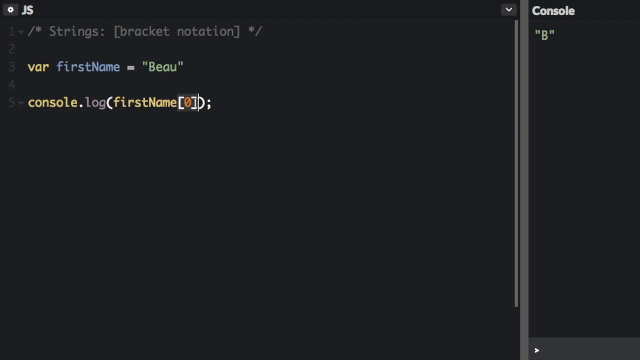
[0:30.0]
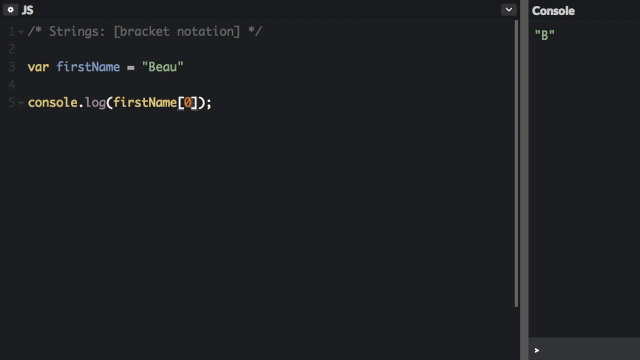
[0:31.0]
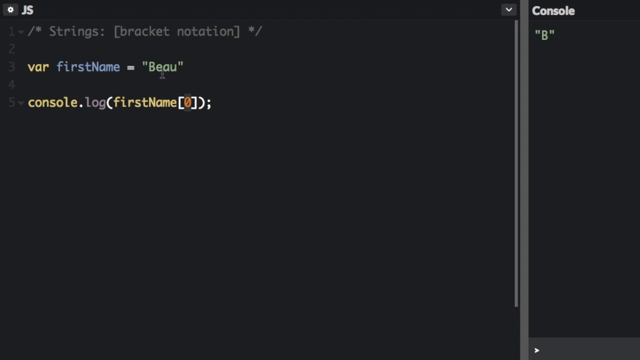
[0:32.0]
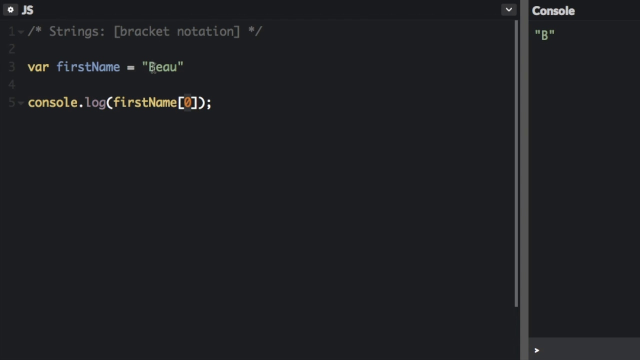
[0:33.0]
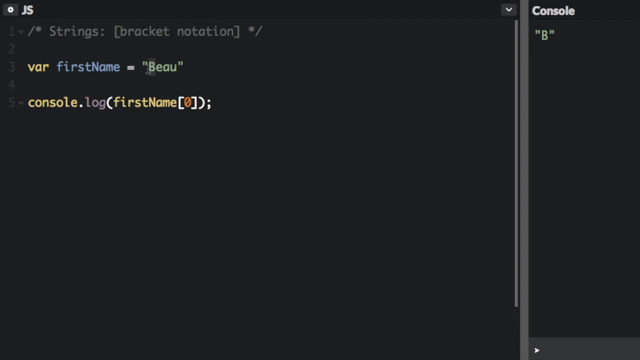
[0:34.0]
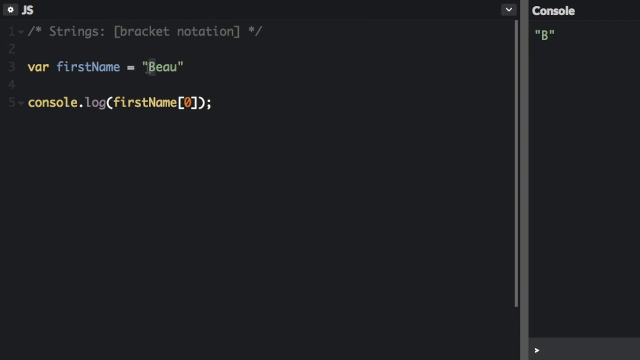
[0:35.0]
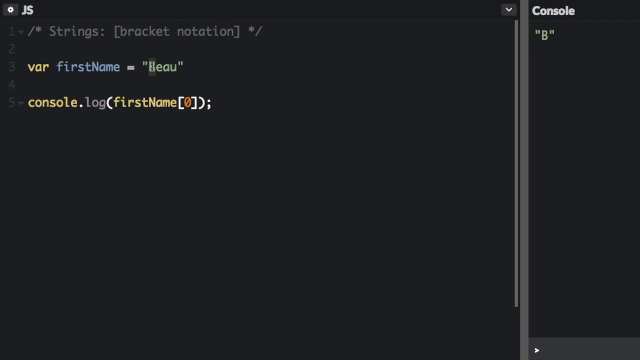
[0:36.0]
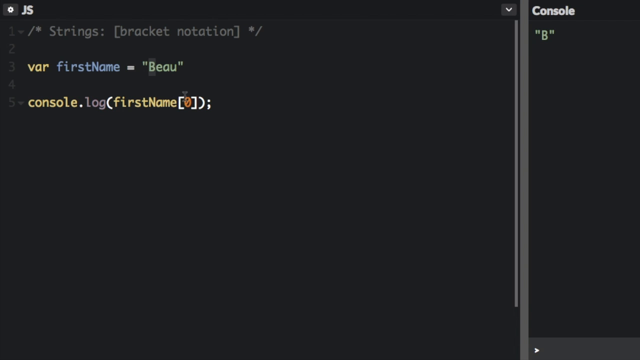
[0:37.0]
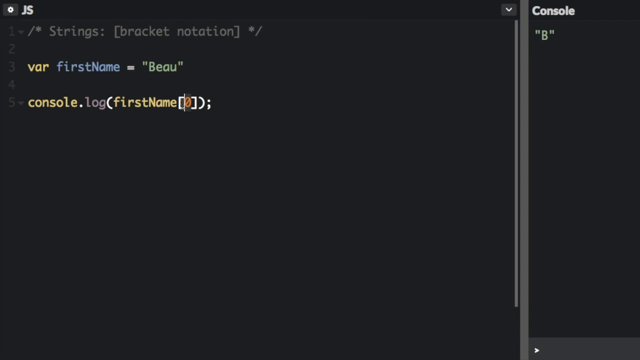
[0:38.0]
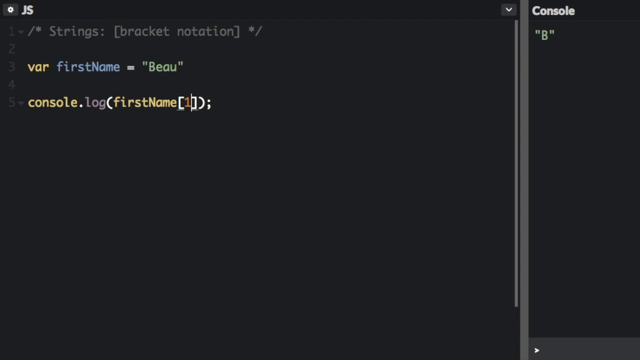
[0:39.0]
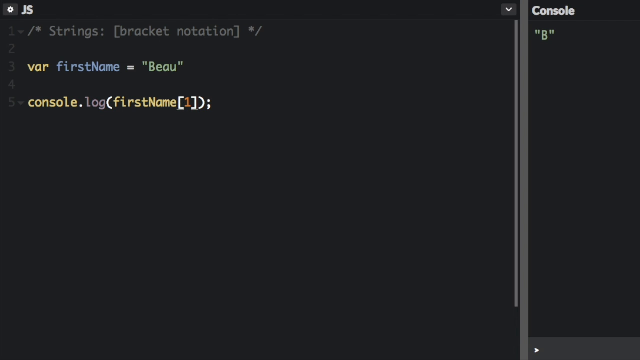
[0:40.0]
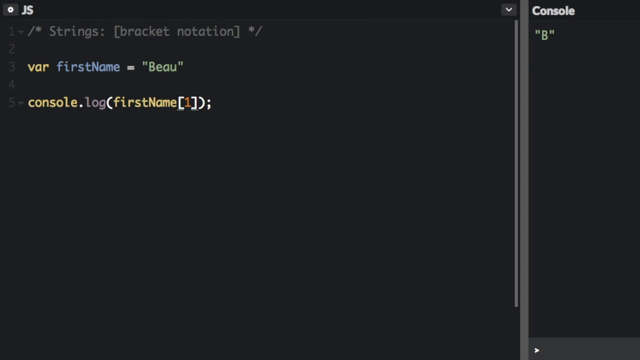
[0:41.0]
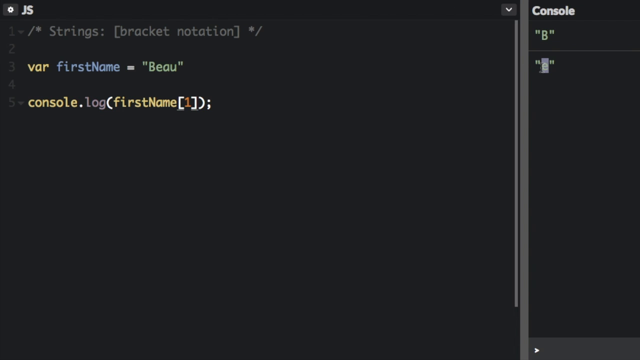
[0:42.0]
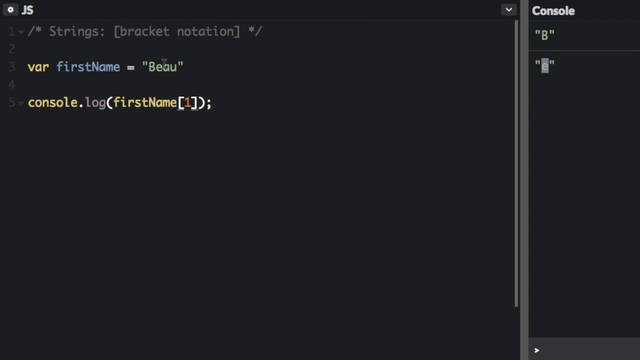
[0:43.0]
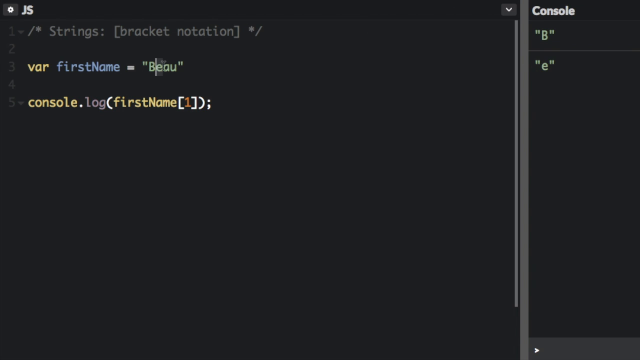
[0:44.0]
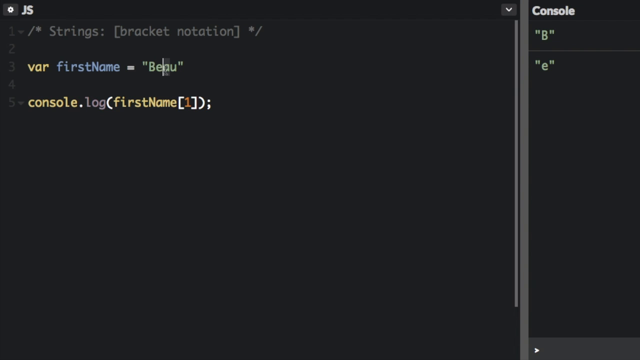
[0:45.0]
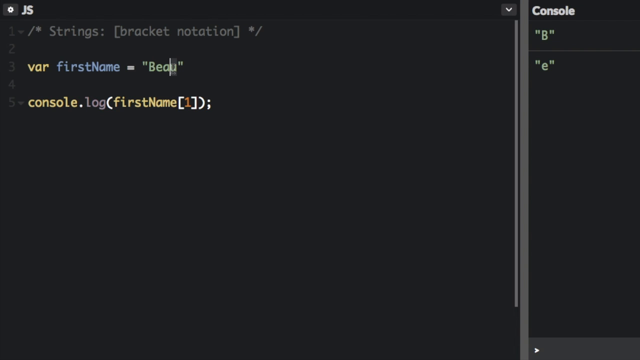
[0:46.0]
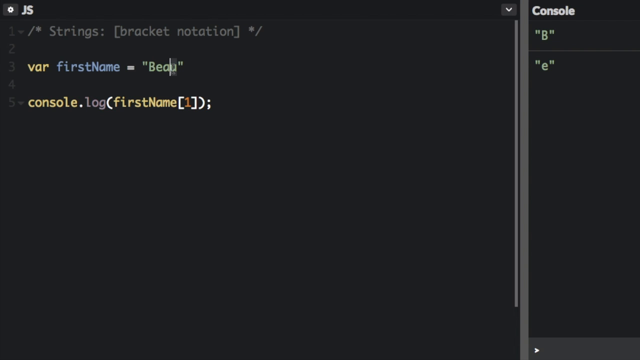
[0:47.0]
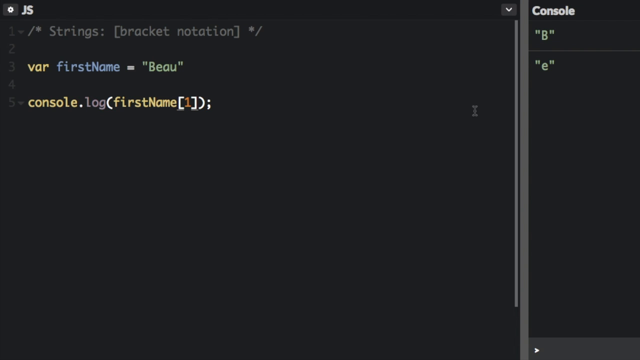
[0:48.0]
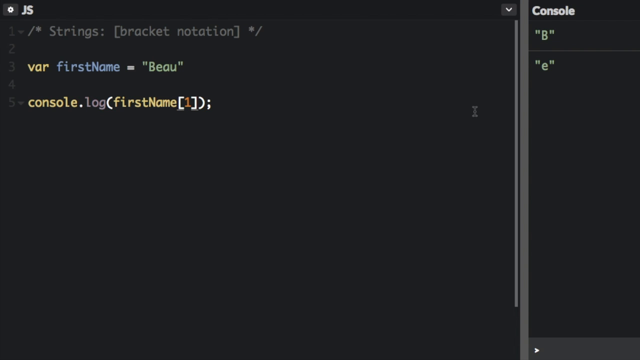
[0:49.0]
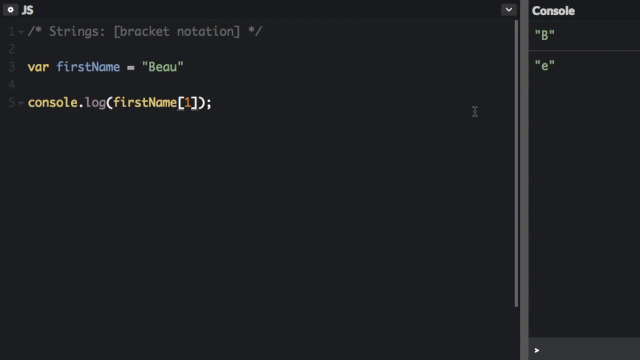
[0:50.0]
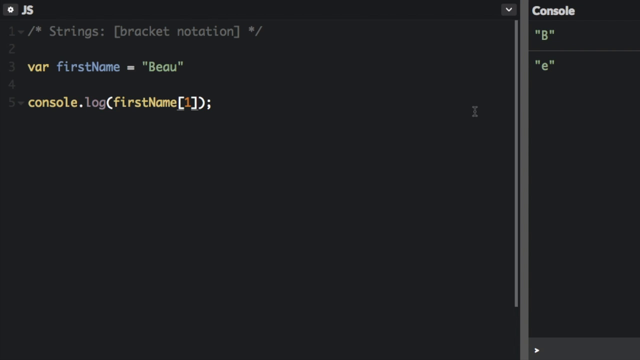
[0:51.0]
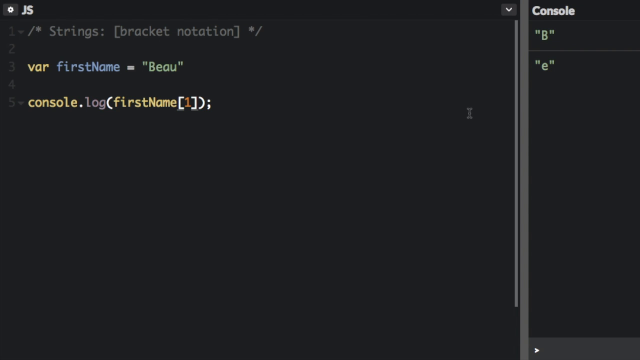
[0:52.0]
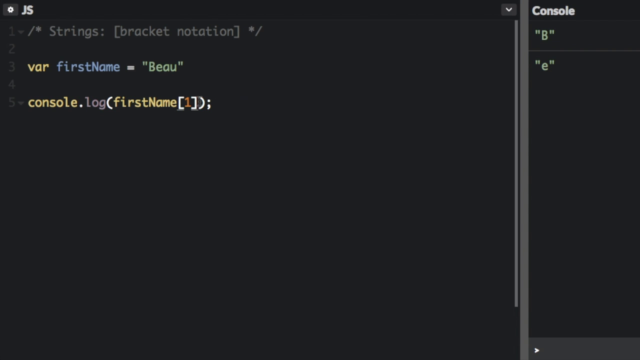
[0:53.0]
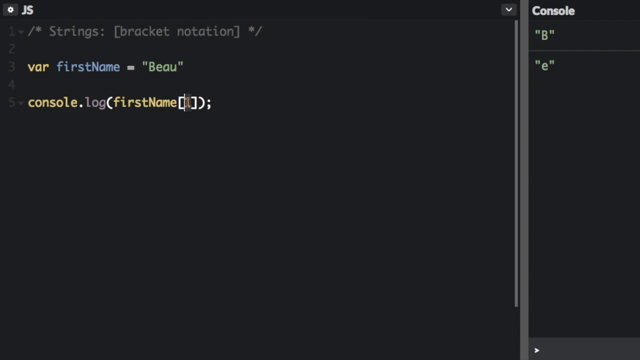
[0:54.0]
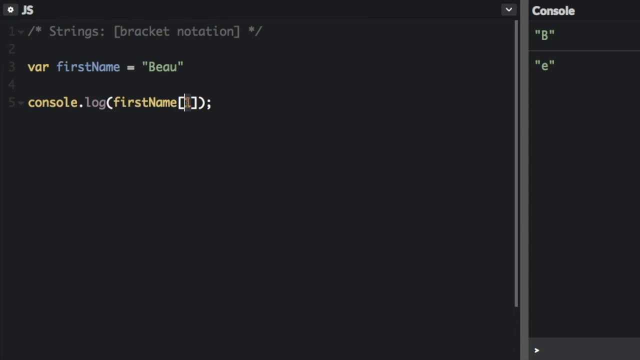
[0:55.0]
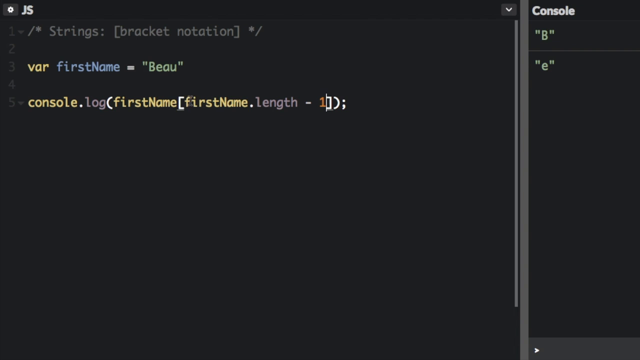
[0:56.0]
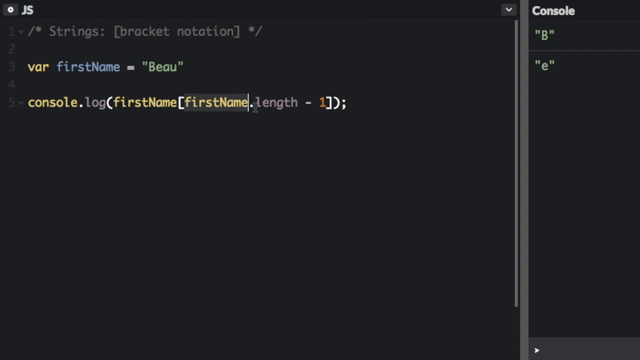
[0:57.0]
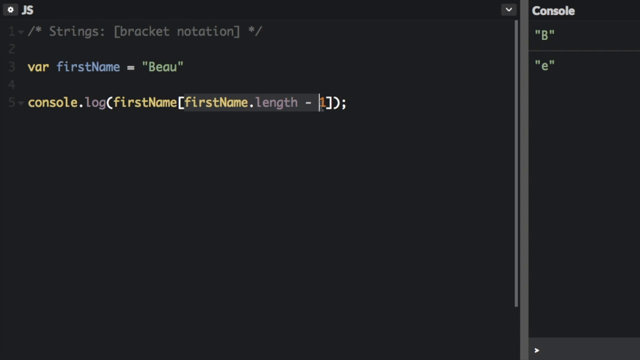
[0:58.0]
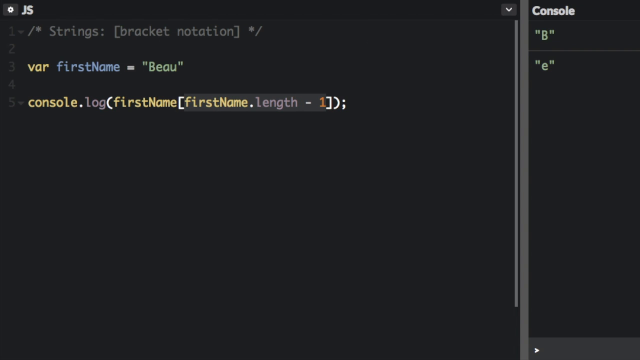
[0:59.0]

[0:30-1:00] Under the number 1 appears a number 2, which is a blank line of black space. Under the word "console" in the right corner, "B" appears. After line 2 comes line 3: var firstName = "Beau", which gives a name. Below that, line 4 is blank. Line 5 then reads "console." in yellow font, "log" in gray font, "(" in white font, and firstName in yellow font, followed by "[", a zero with a diagonal line running from bottom left to top right, "]", a vertical line and ")". The cursor moves to the space below "console" and "B" and enters "e". It then hovers between the a and the u, and goes back to change the number after firstName from the slashed zero to a 1.